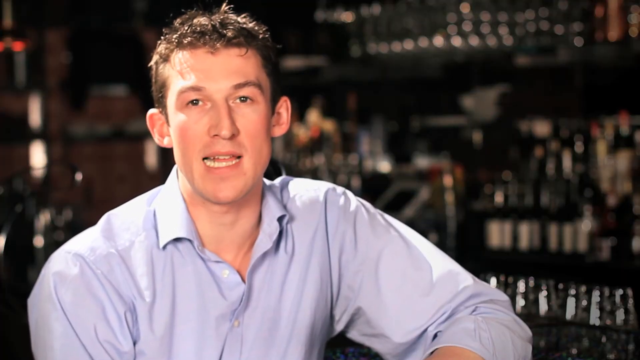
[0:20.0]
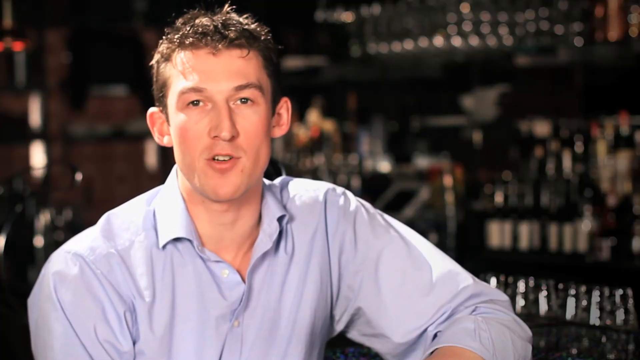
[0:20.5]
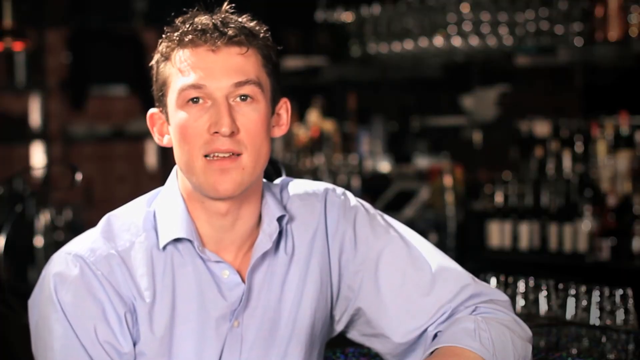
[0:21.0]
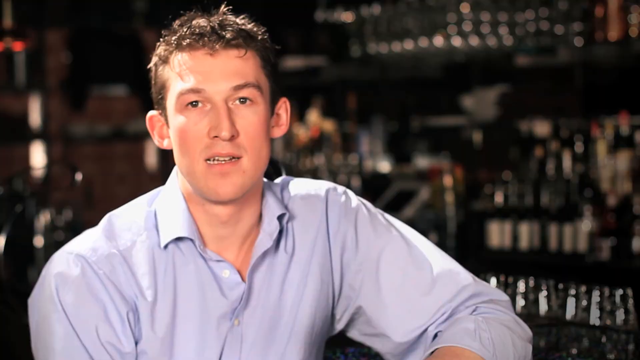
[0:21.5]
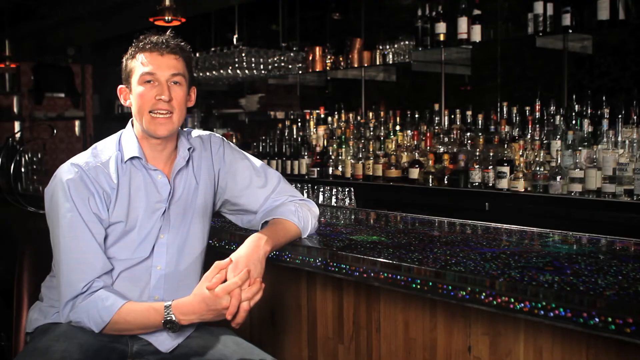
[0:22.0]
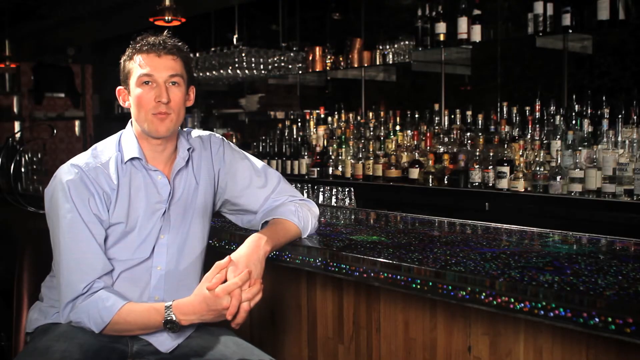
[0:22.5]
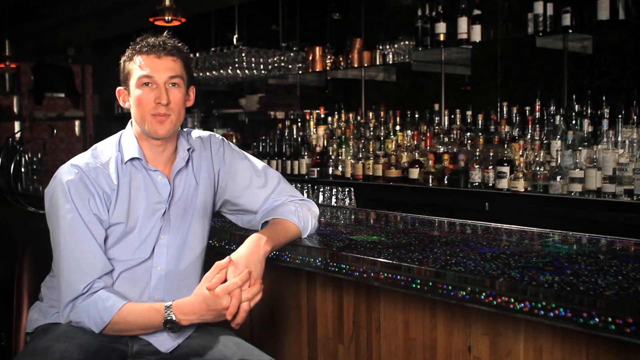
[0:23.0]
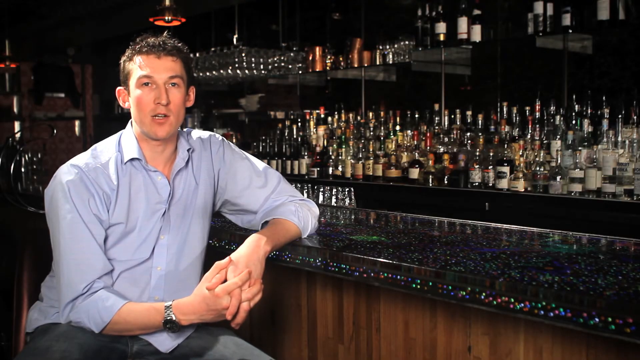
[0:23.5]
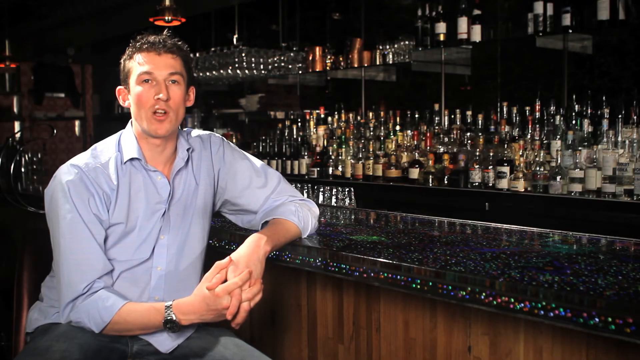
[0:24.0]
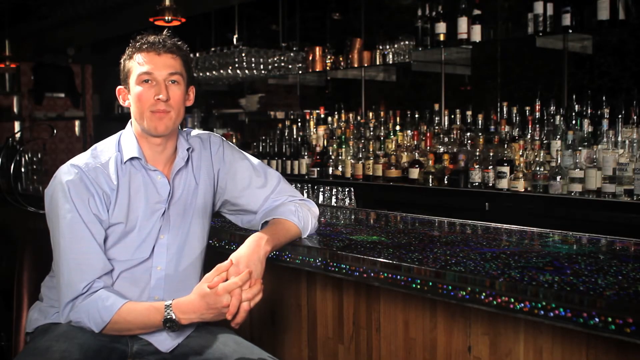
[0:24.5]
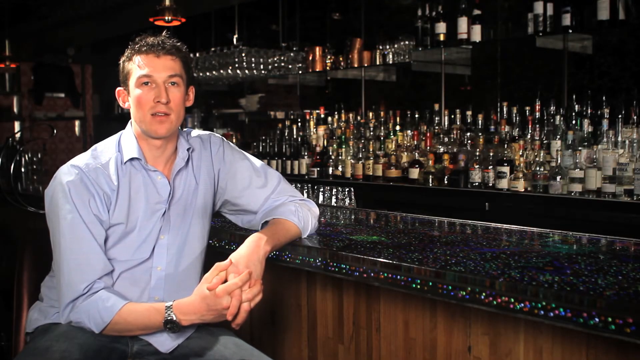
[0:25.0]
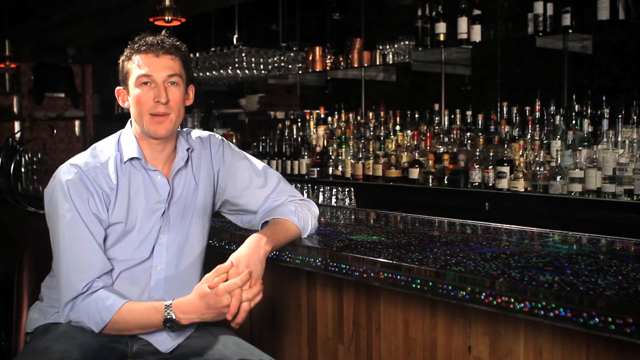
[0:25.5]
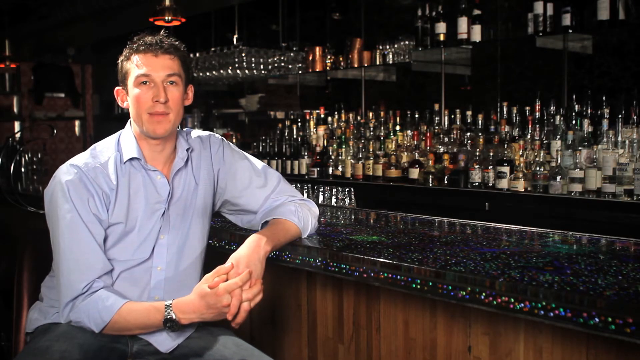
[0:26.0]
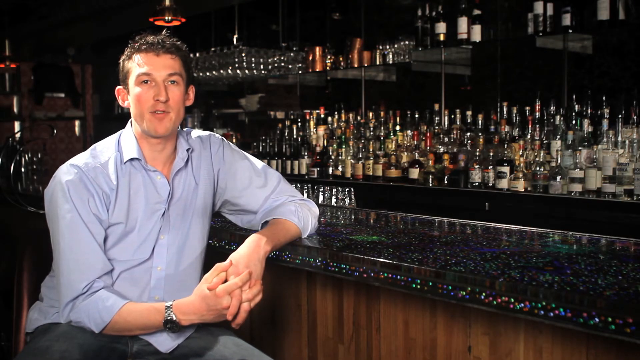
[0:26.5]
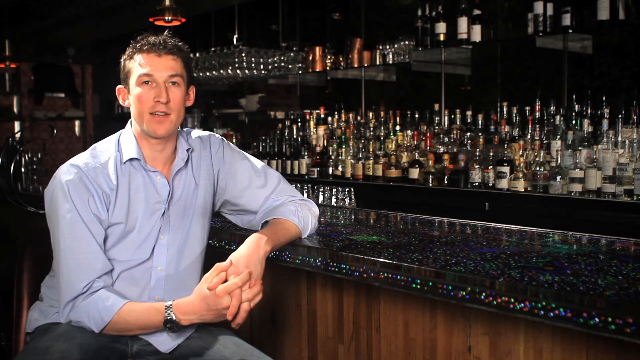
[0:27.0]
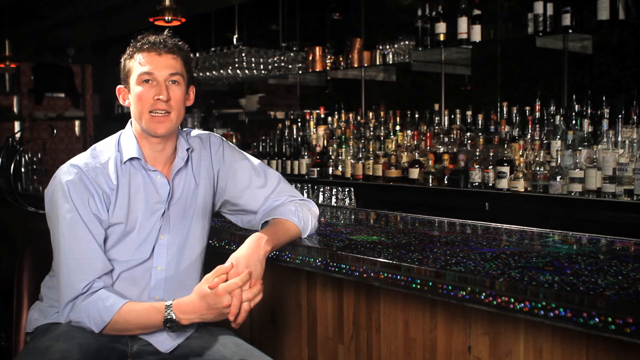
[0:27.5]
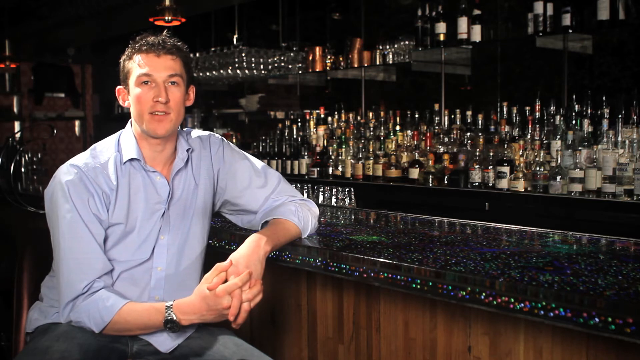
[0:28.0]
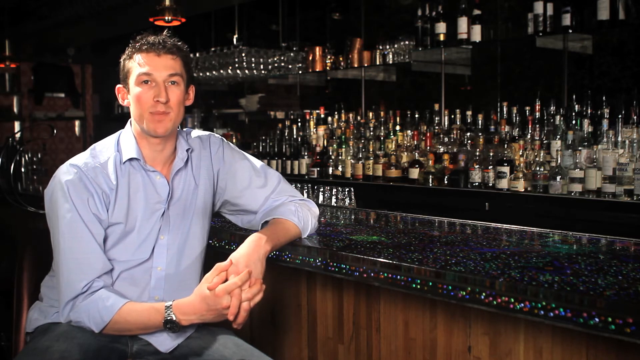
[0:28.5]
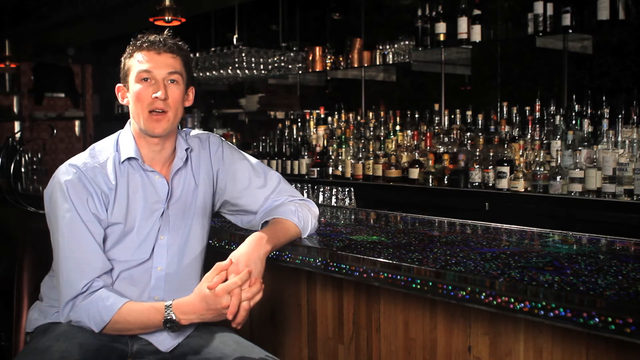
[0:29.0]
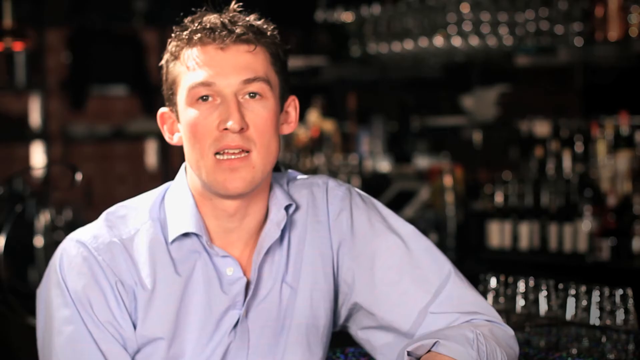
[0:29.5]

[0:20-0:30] A shot shows the man from the chest up in a blue shirt, with blurred images of the bar, glasses and wine bottles behind him. A wide shot follows as he speaks to the camera; he wears blue pants and a watch, and shakes his left leg, sort of in a nervous way. In the wide shot the bar has a wood base and a glass marble top. Wine bottles appear to be on shelves above the spirits, and there are maybe 150 bottles of various spirits; many have their manufacturer caps and others have spigot caps. Mirrors are behind the liquor.